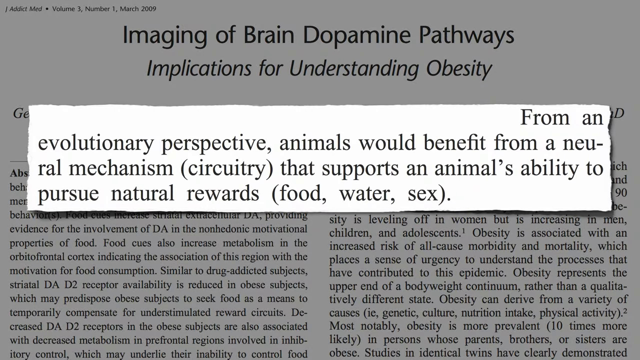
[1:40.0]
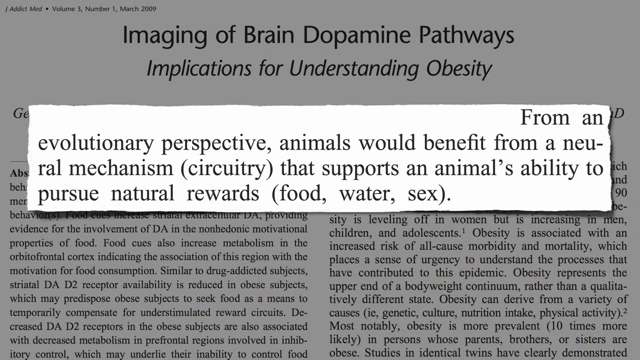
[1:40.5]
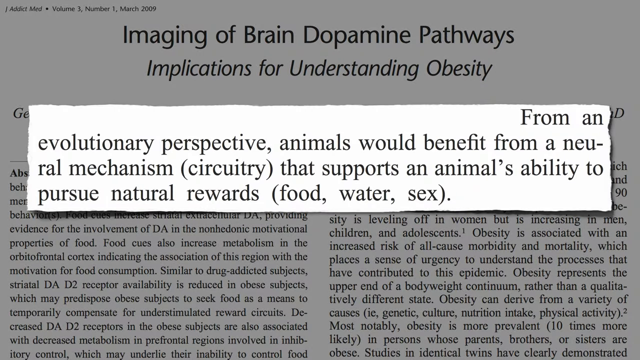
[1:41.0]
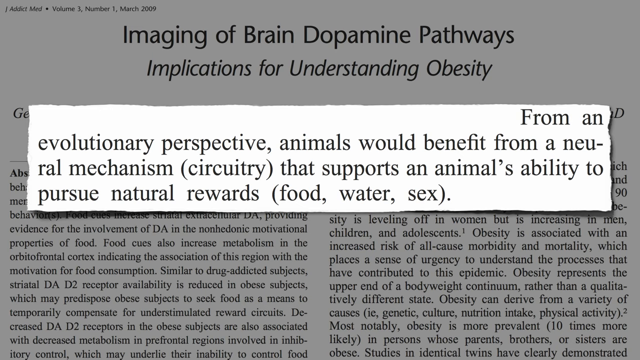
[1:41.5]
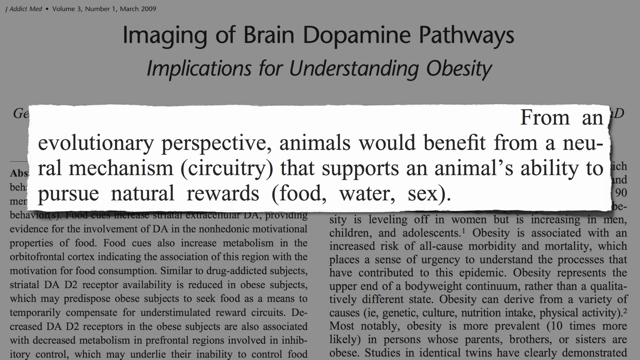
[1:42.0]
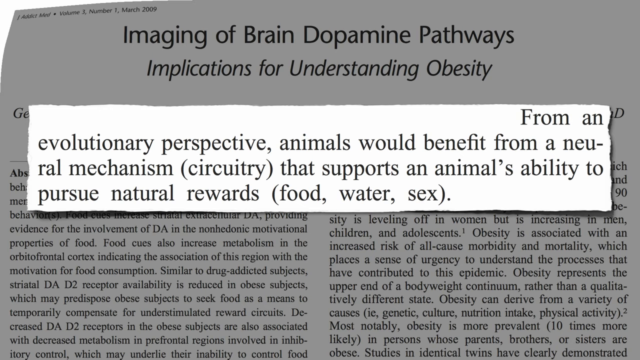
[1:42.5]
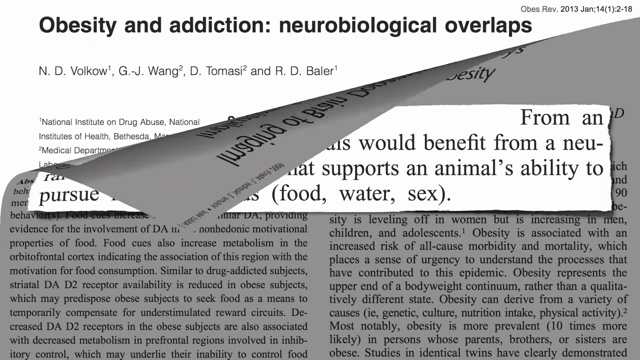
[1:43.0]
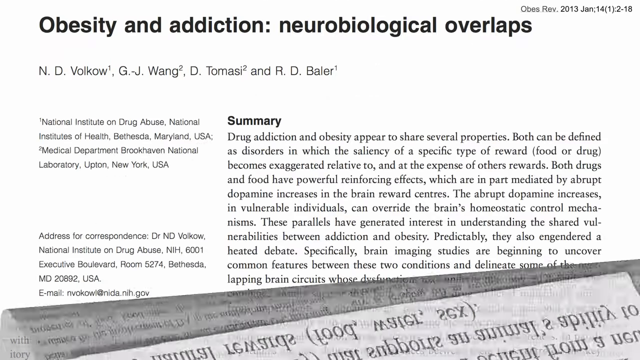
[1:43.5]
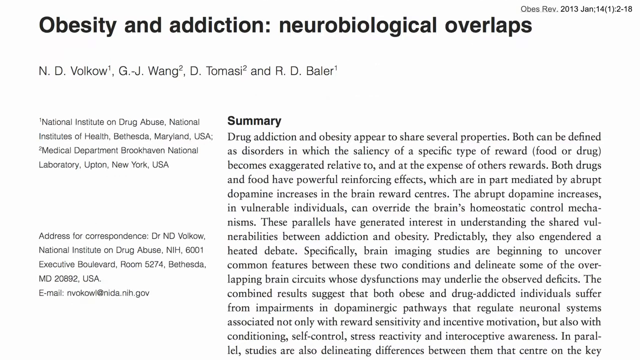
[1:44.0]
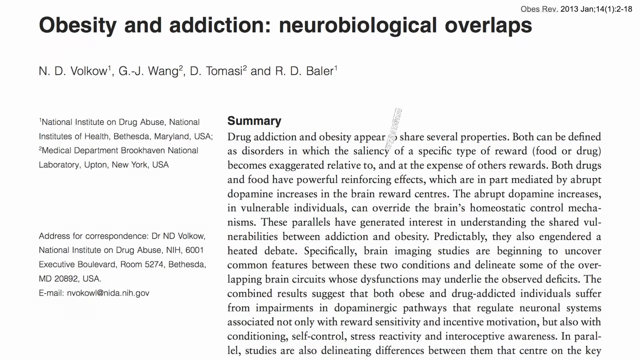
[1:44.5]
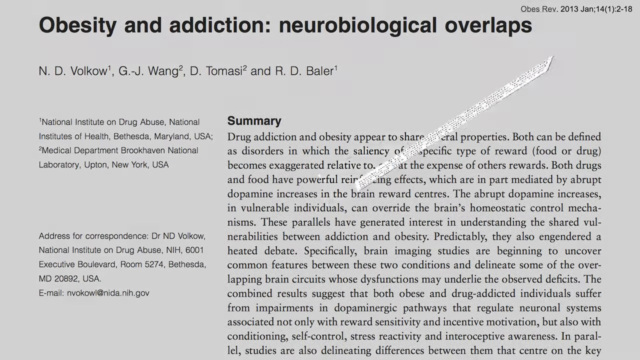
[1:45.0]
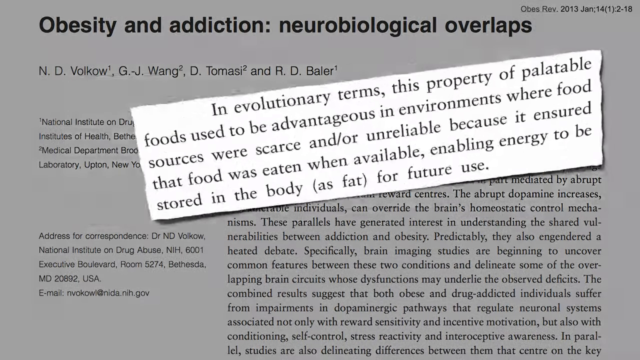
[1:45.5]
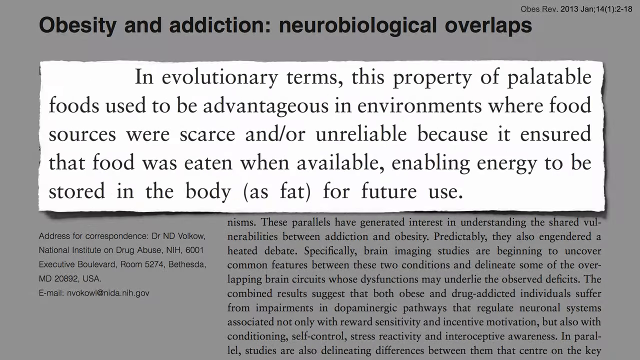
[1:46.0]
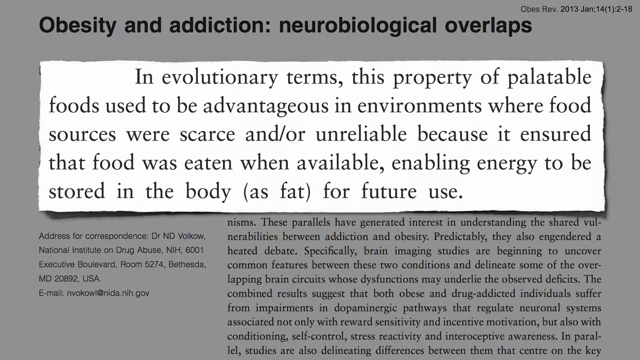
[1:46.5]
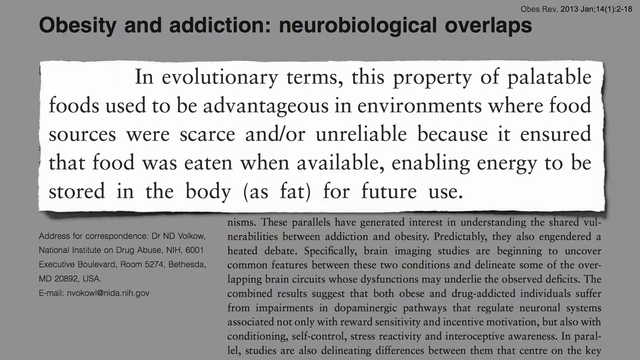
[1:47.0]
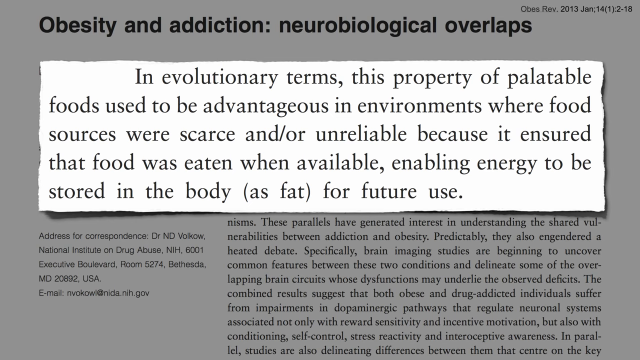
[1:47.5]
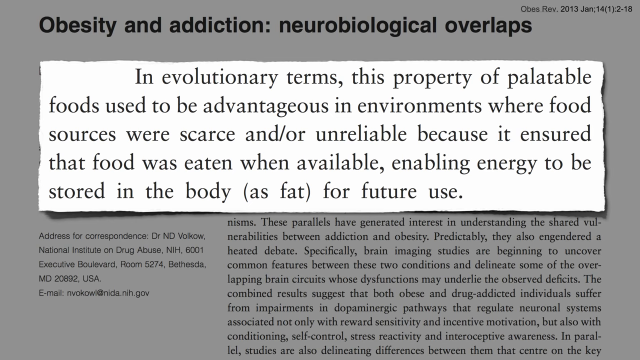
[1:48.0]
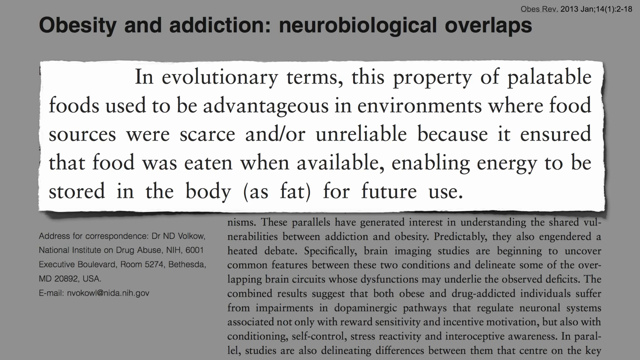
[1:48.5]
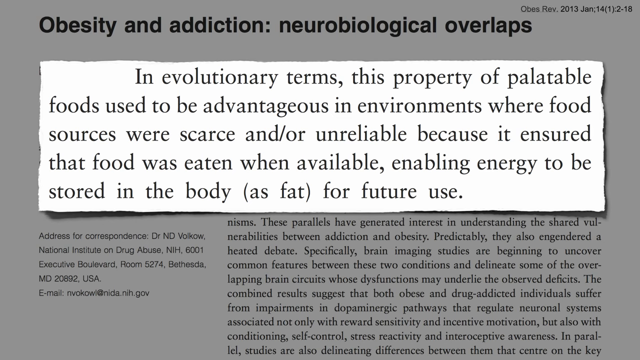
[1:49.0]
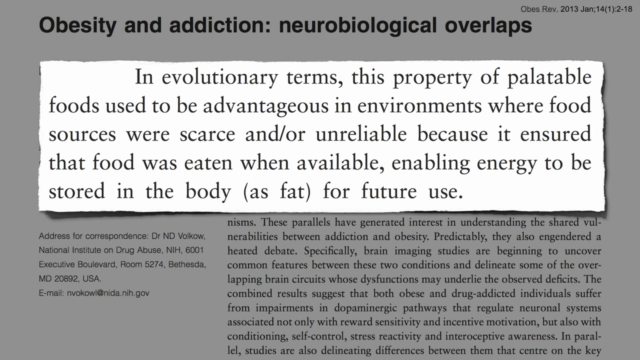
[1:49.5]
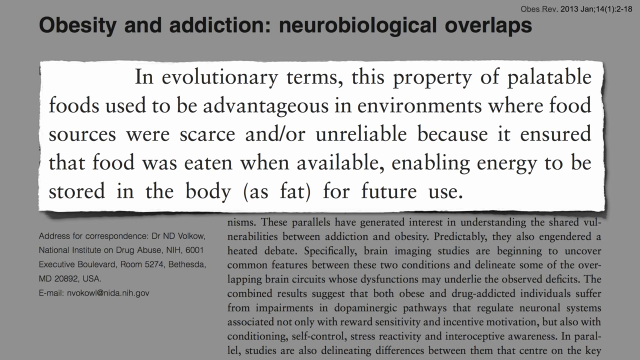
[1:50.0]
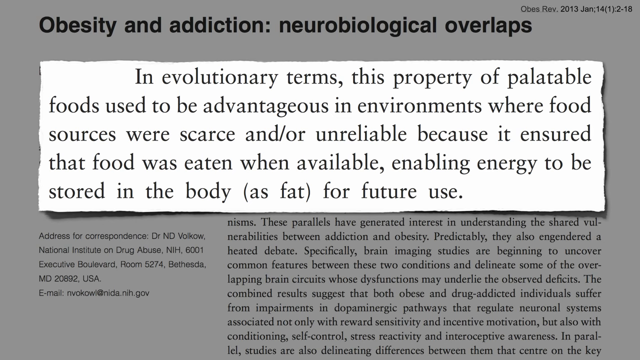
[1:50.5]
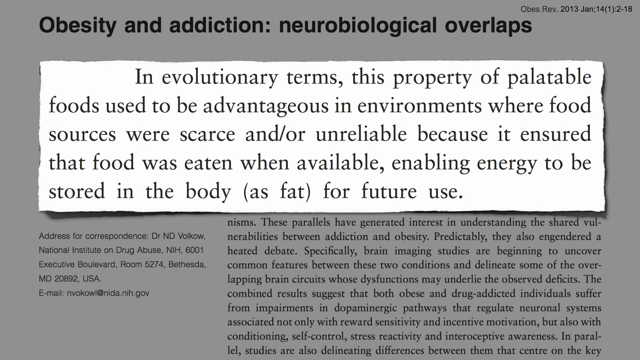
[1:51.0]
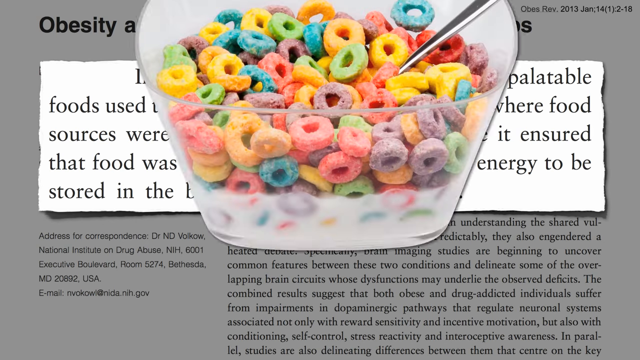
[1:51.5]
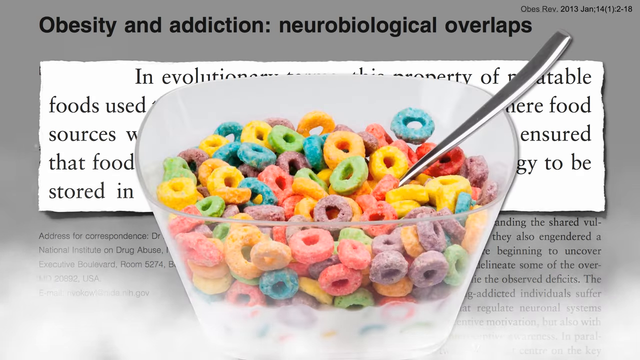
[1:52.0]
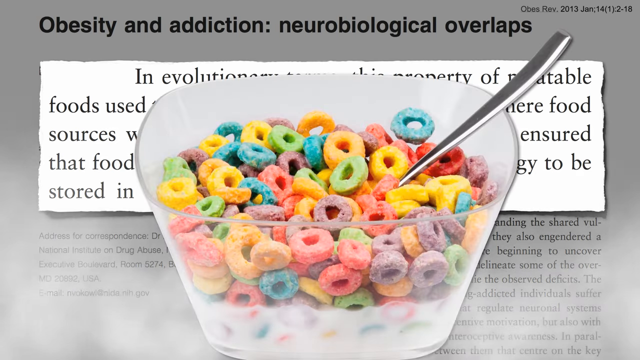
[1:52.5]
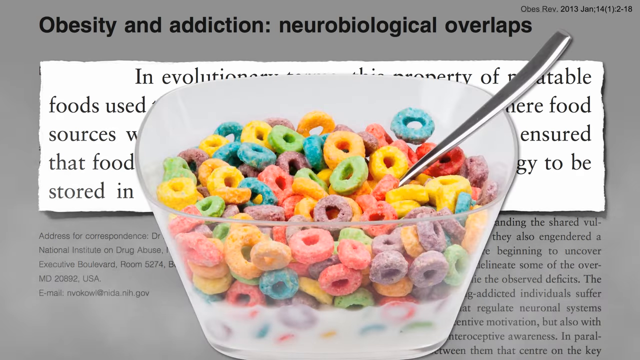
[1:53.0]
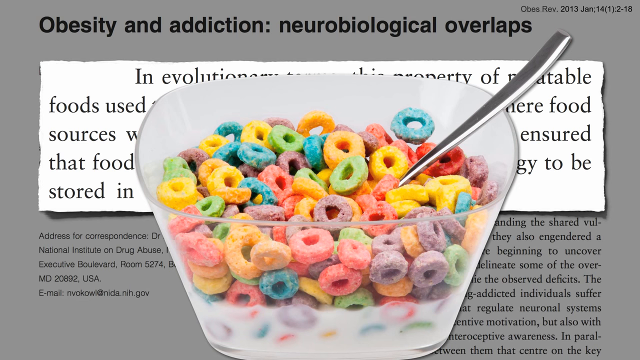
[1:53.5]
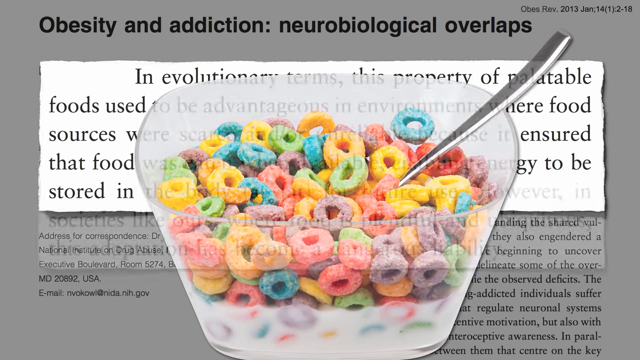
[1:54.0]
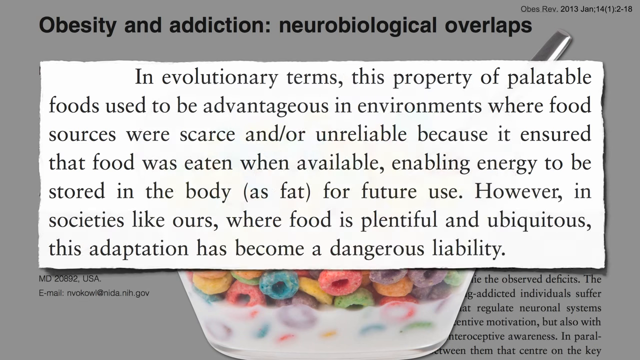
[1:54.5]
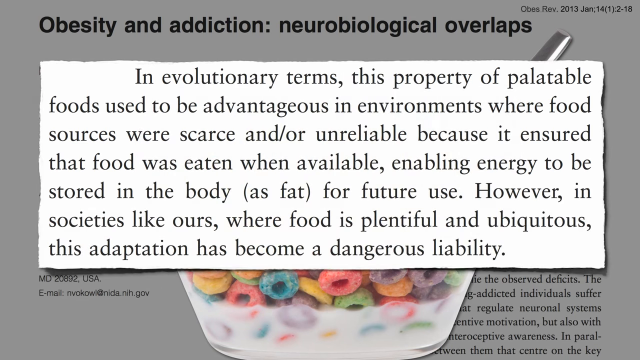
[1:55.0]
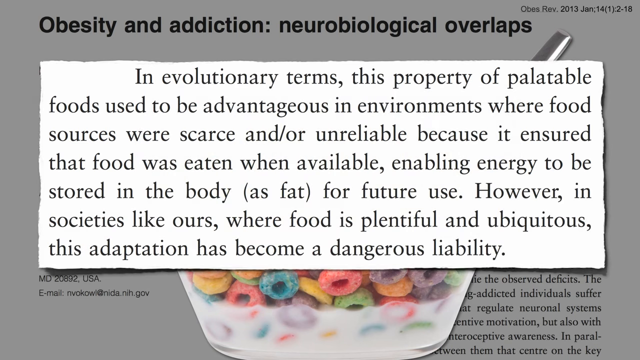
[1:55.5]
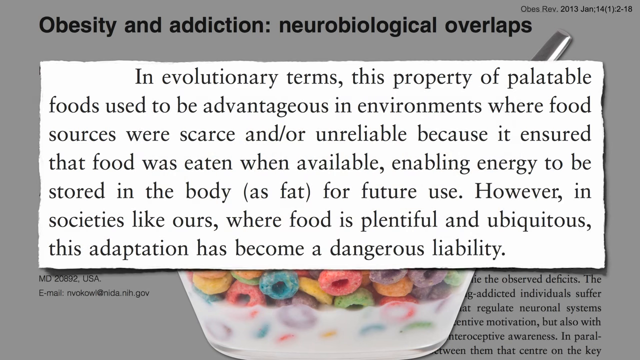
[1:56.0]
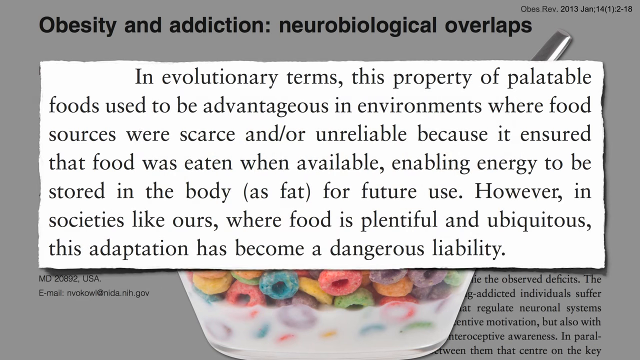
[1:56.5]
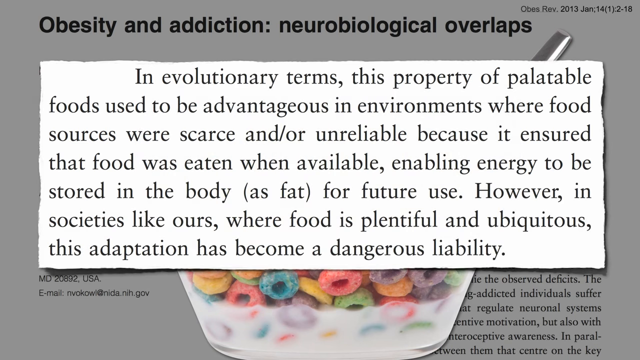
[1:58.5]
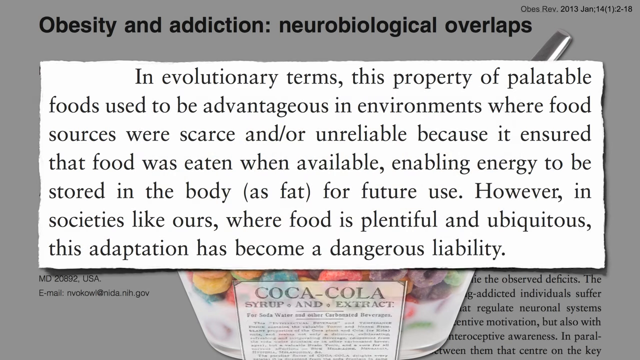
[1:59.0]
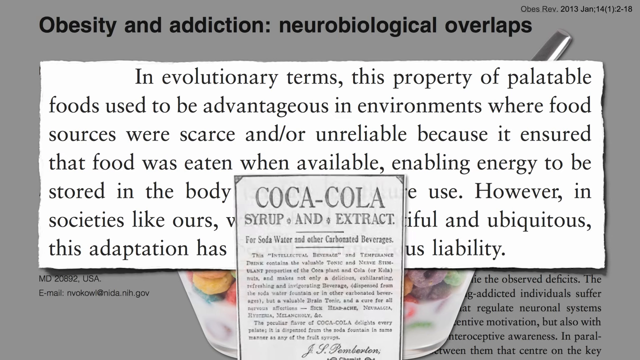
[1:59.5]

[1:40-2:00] The frame is a little wider than it is tall. At the top is an article whose title ends "Dopamine Pathways Implications for Understanding Obesity". In the very center of the article is a blown-out rectangle with a white background and a sentence in black text: "From an evolutionary perspective, animals would benefit from neural mechanism circuitry that supports an animal's ability to produce natural rewards, food, water, and sex." The rest of the article in the background is grayed out. It peels down, leading to another article titled "Obesity and Addiction Neurobiological Overlaps", with the summary below the title. A blown-up paragraph with a white background then appears, graying out the rest of the article behind it, and it says: "In evolutionary terms, the property of palatable foods used to be advantageous in environments where food sources were scarce and or unreliable because it ensured that food was eaten when available, enabling energy to be stored in the body as fat for future use."